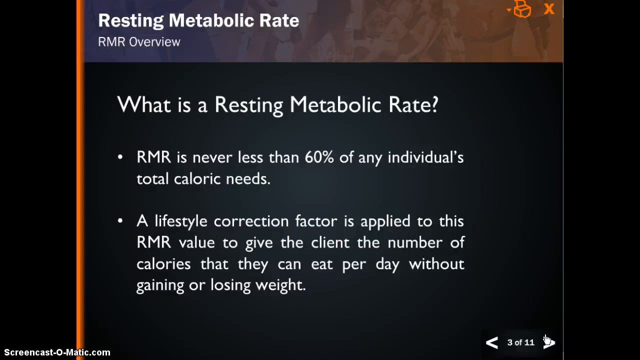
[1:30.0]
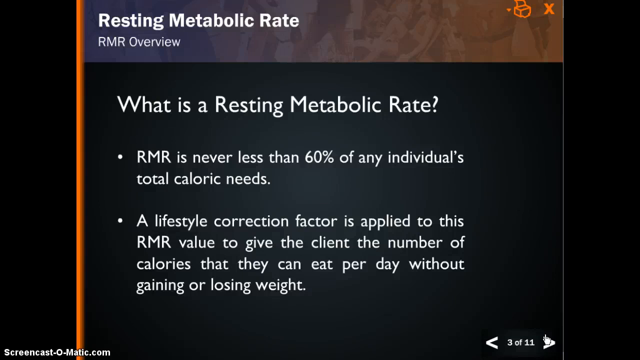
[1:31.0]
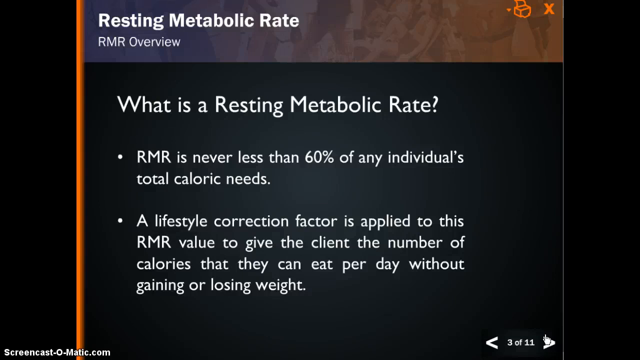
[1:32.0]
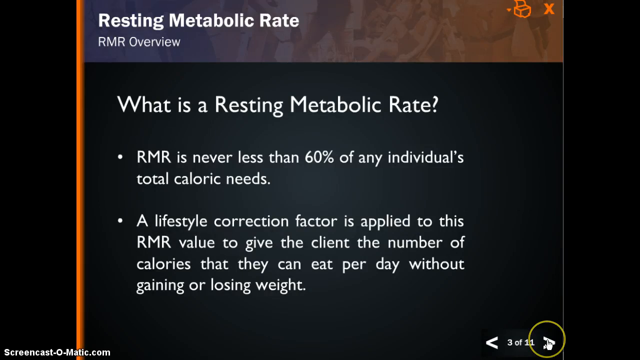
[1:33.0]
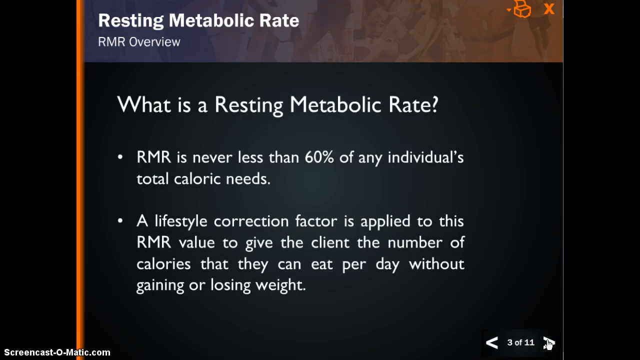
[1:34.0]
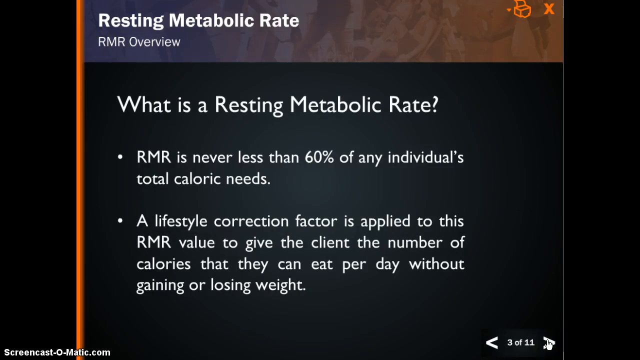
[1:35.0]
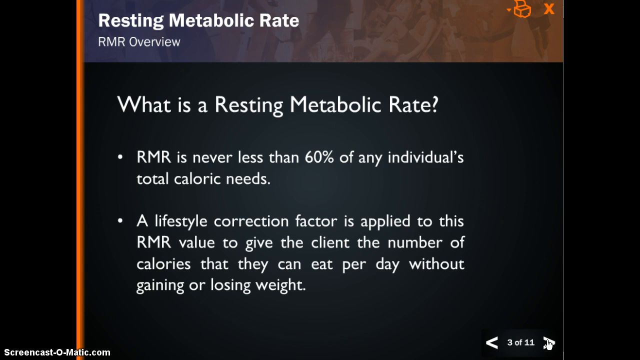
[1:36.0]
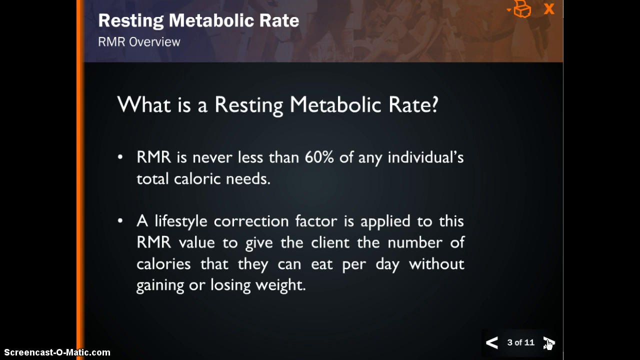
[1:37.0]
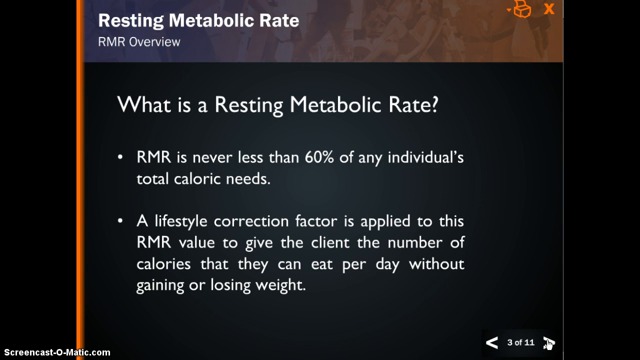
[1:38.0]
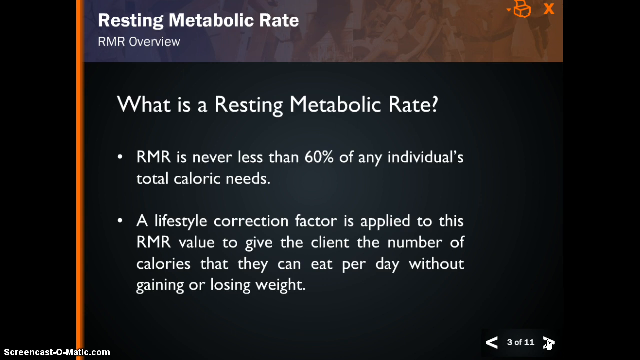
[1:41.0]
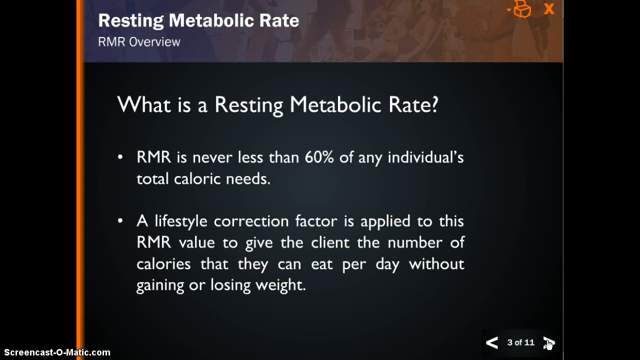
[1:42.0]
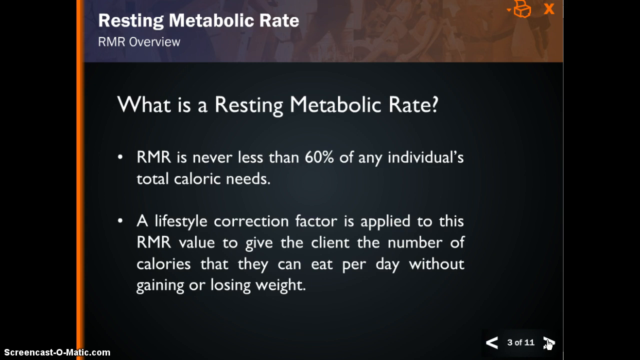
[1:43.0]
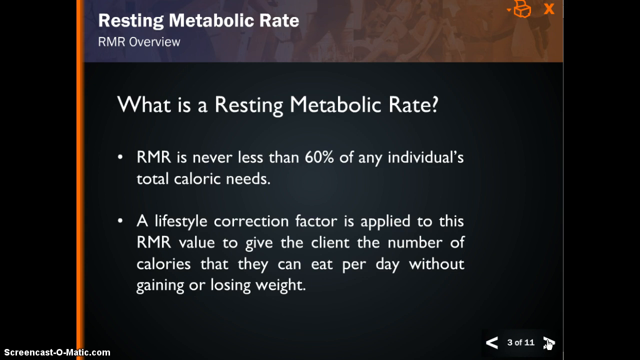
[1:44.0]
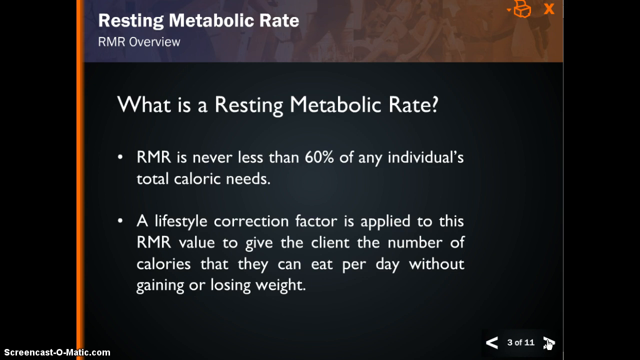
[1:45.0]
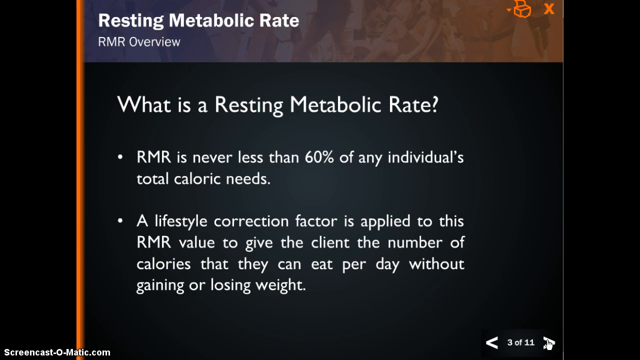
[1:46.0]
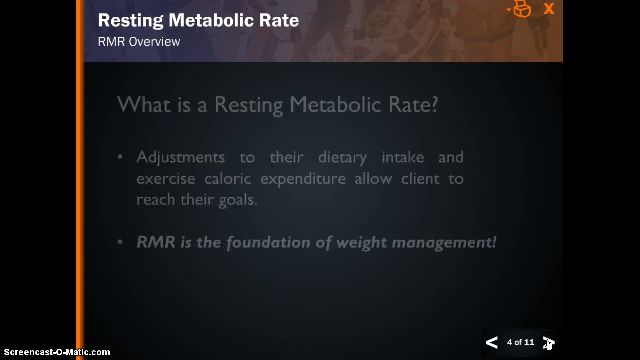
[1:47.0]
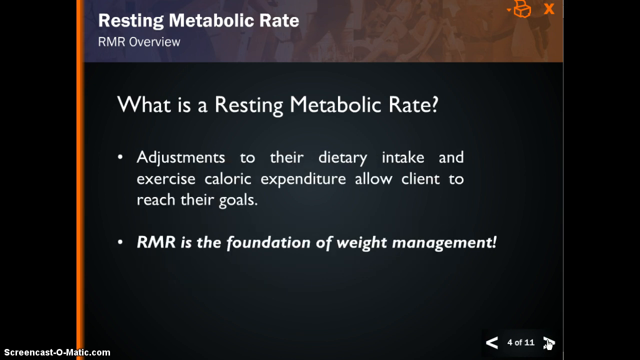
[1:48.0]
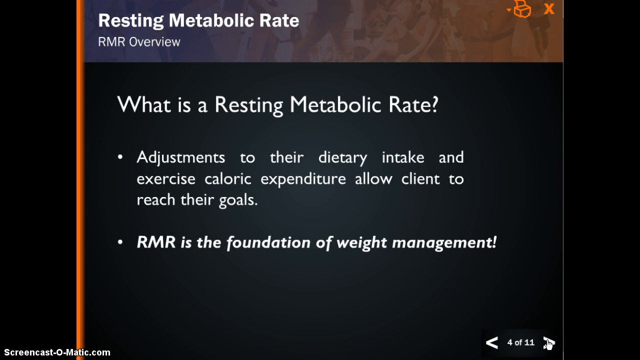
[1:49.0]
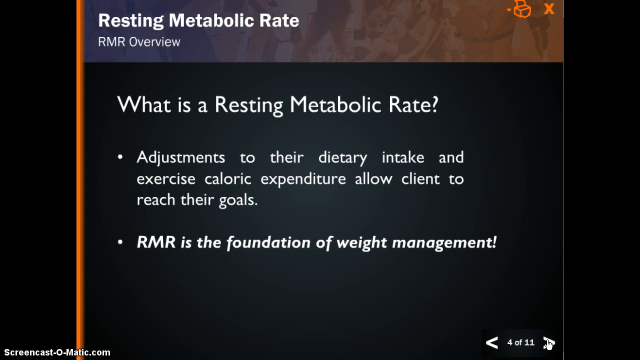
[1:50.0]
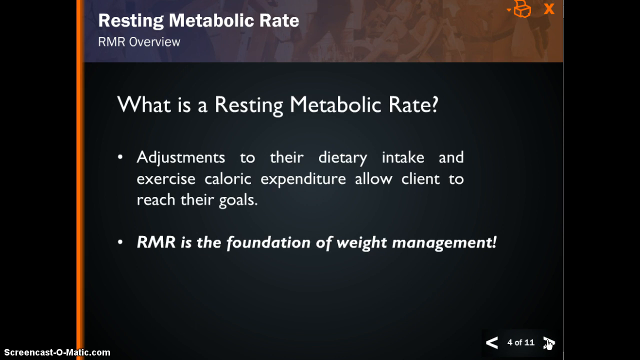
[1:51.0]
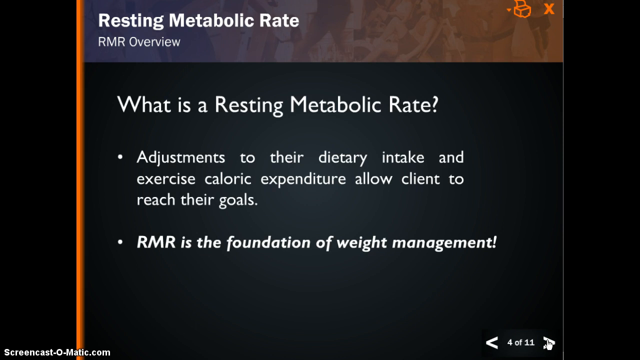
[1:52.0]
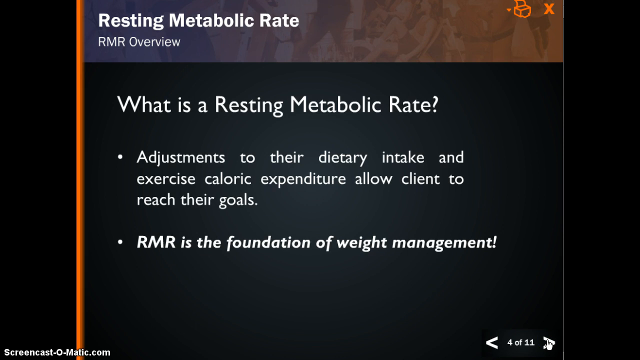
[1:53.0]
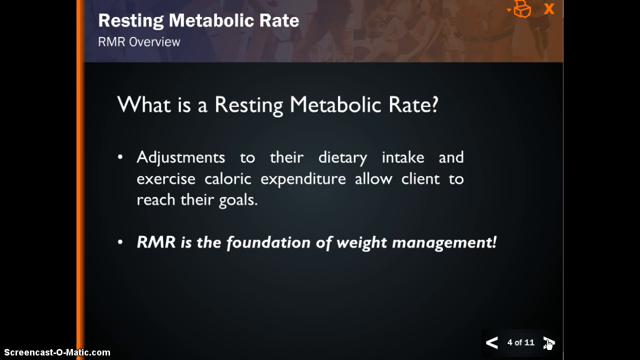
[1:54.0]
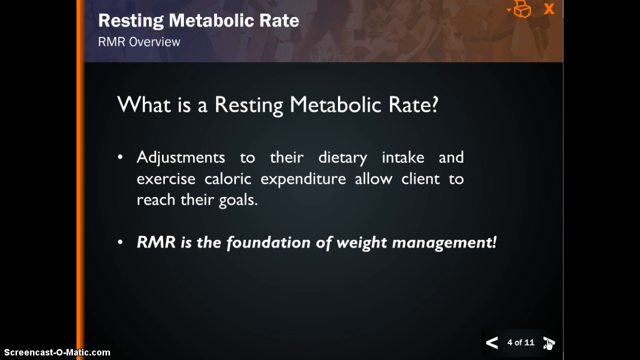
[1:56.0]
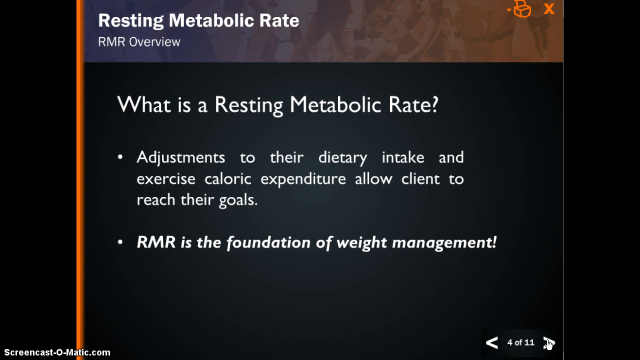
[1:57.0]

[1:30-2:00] The slide stays up for a long time before the next two bullets appear, with everything else unchanged. The first bullet underneath "What is a Resting Metabolic Rate" states that adjustments to their dietary intake and exercise caloric expenditure allow the client to reach their goals. The last bullet point, about RMR being the foundation of weight management, is slightly larger than the one above it. The rest of the slide is the same: the orange vertical line on the left side of the screen and the skinny white line on the right mark each side of the slide, the "Resting Metabolic Rate" and "RMR Overview" text is white on top of the banner, and the orange printer and X icons remain at the top right.